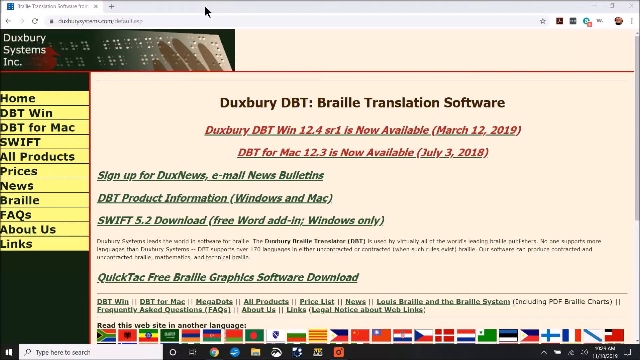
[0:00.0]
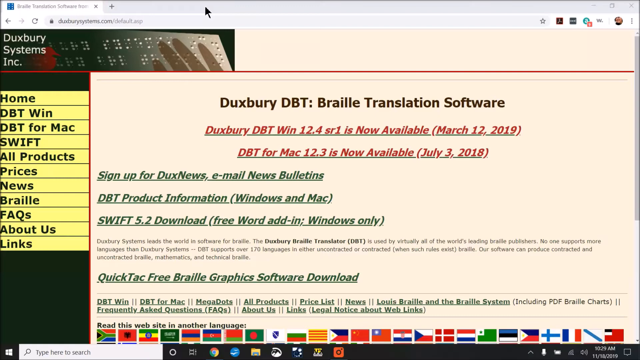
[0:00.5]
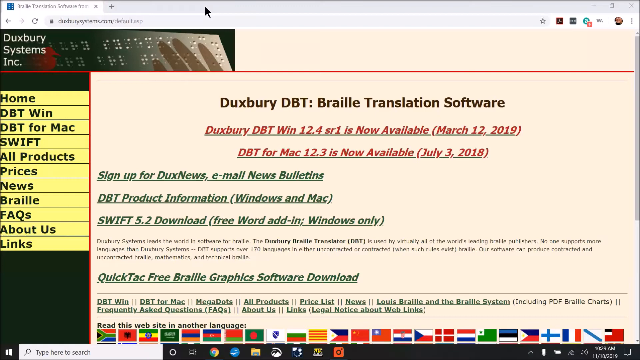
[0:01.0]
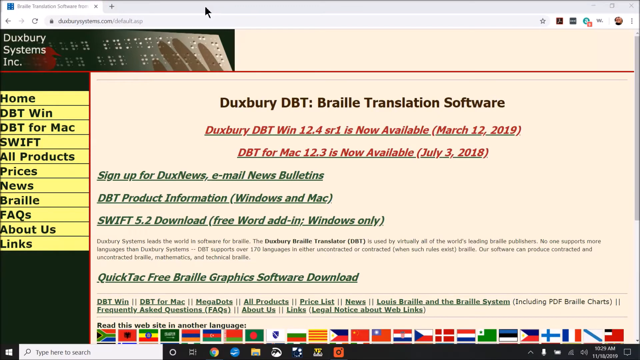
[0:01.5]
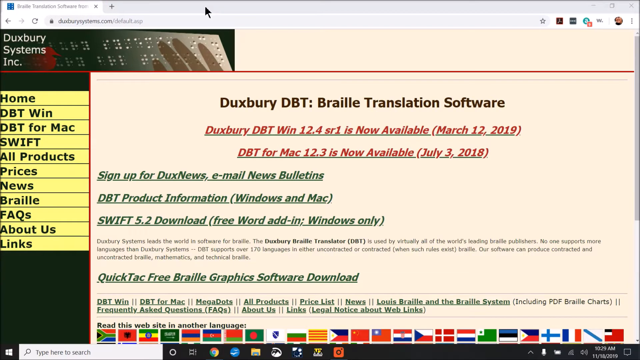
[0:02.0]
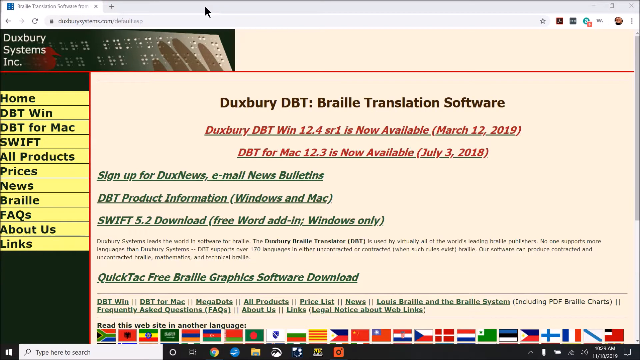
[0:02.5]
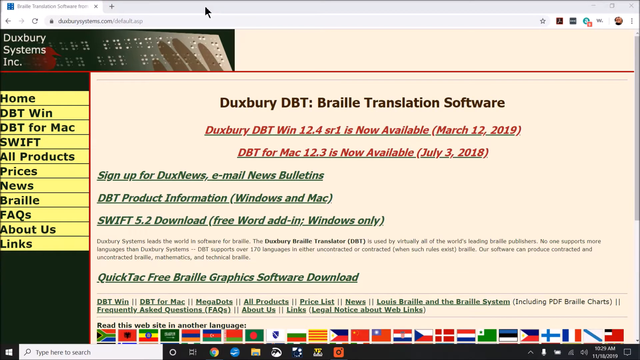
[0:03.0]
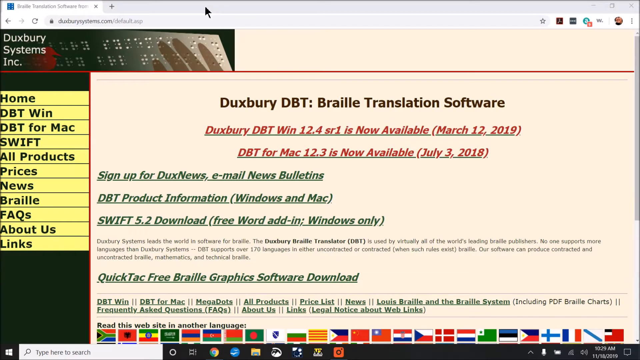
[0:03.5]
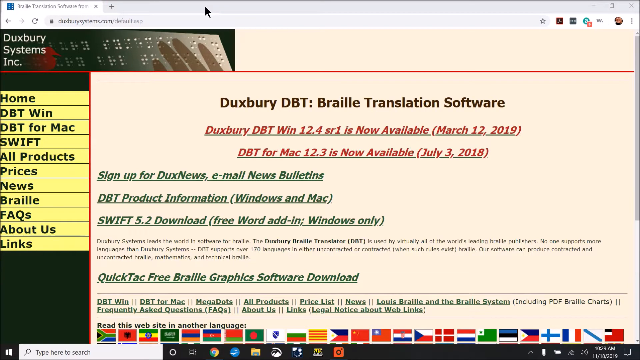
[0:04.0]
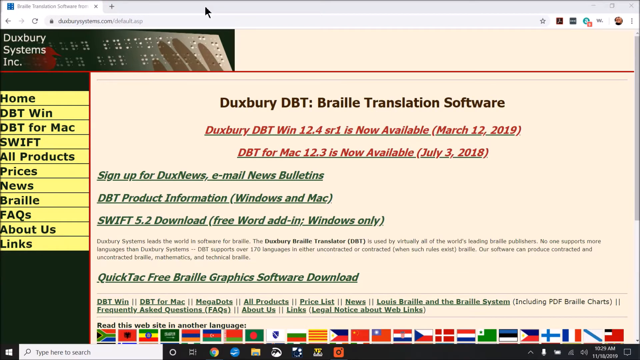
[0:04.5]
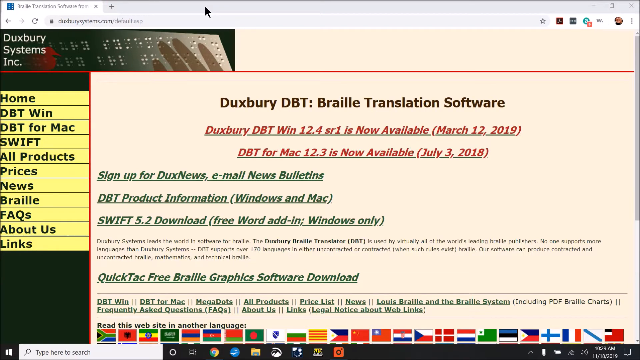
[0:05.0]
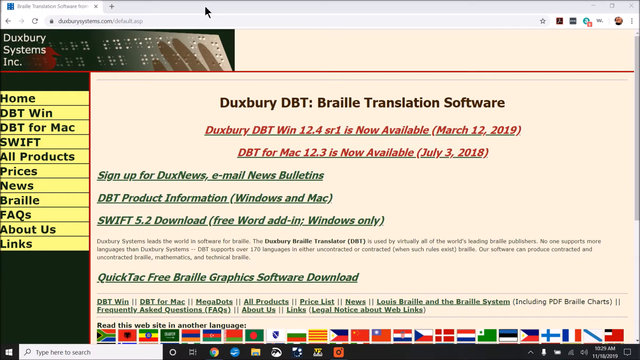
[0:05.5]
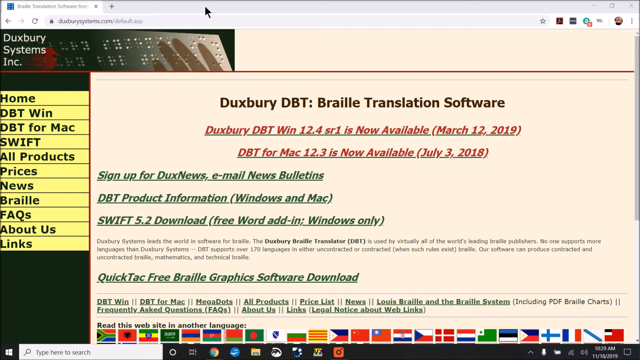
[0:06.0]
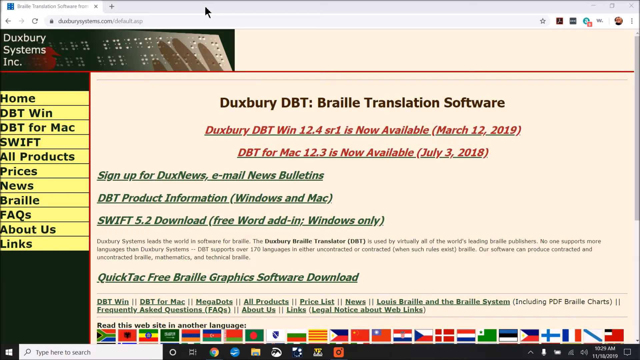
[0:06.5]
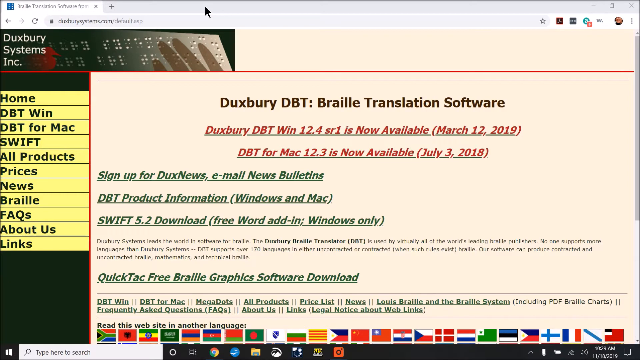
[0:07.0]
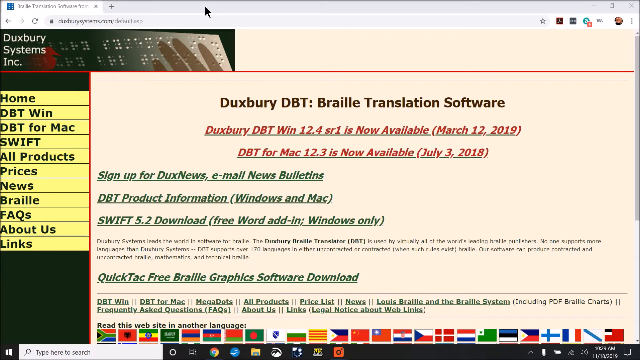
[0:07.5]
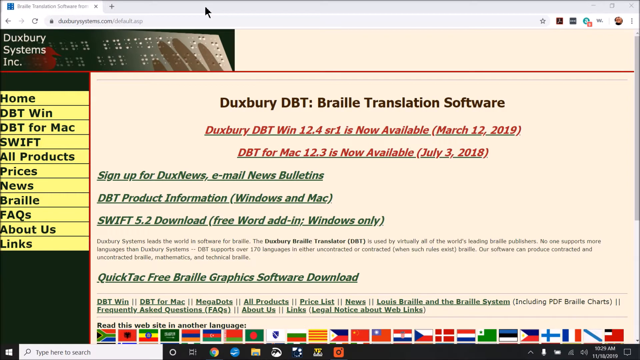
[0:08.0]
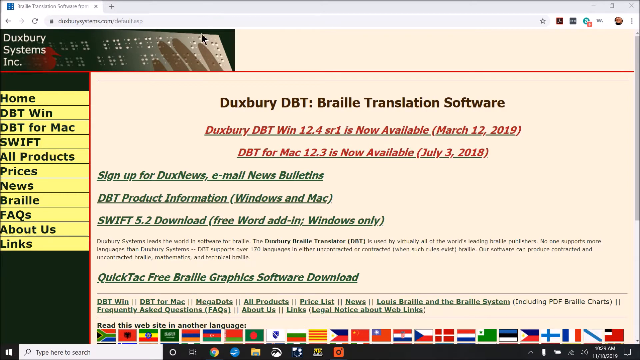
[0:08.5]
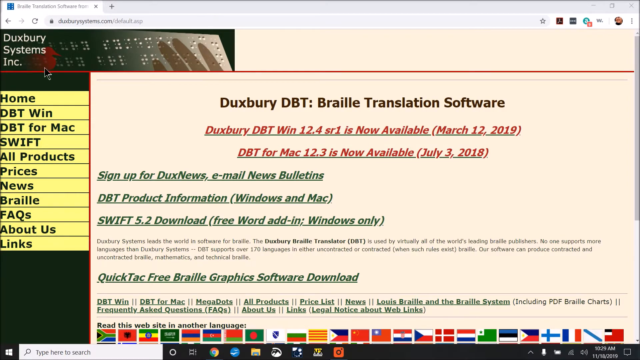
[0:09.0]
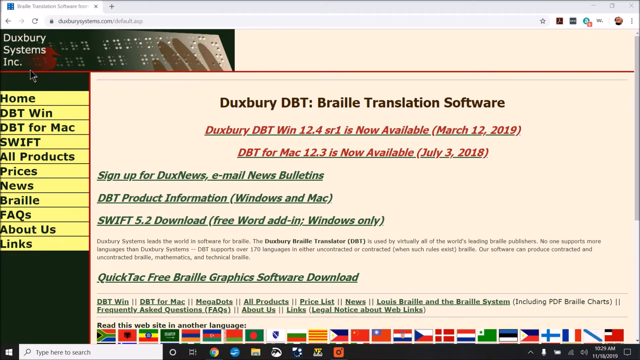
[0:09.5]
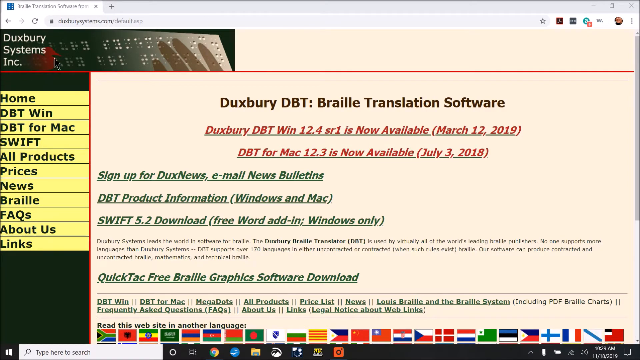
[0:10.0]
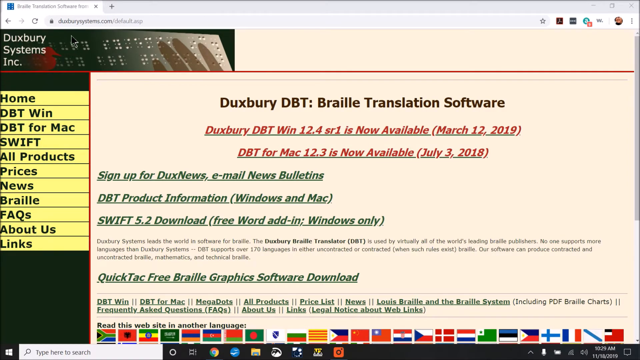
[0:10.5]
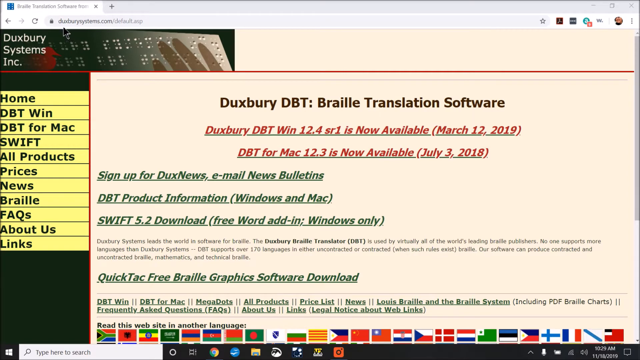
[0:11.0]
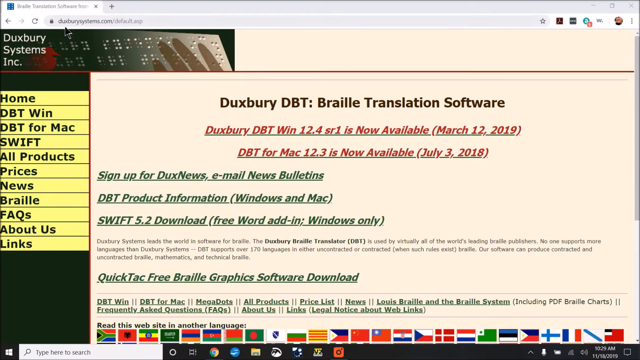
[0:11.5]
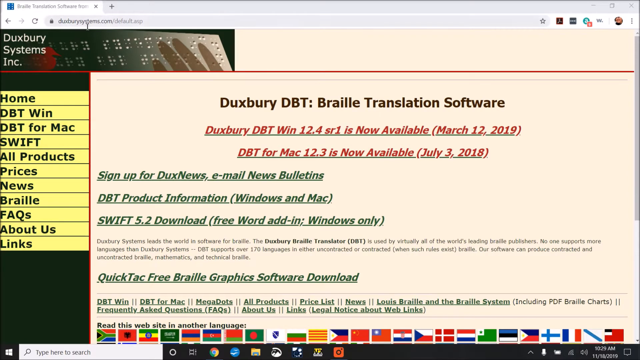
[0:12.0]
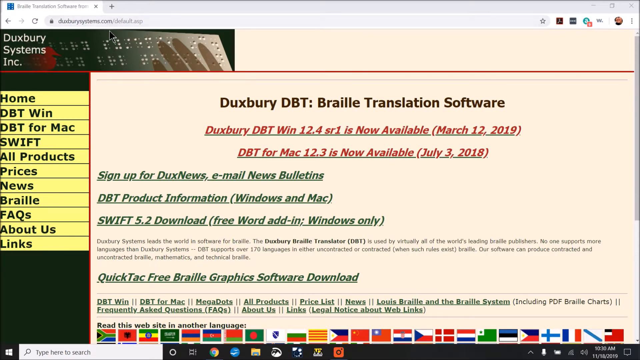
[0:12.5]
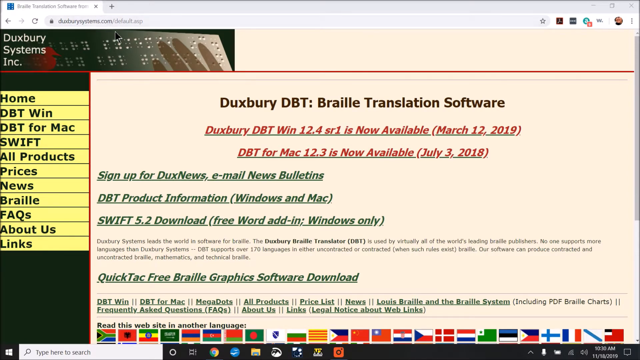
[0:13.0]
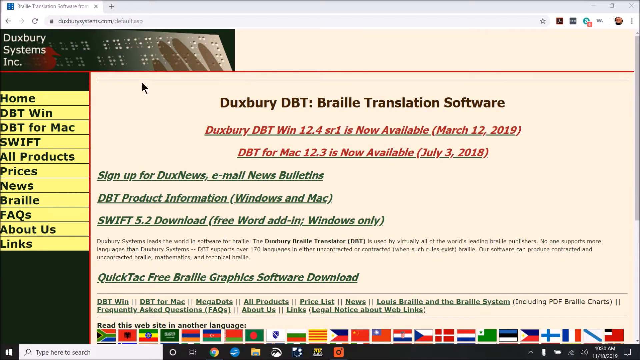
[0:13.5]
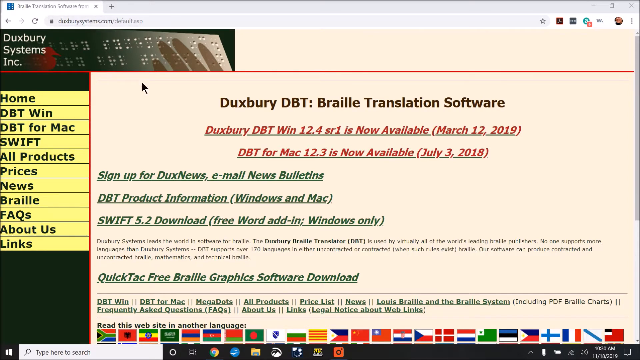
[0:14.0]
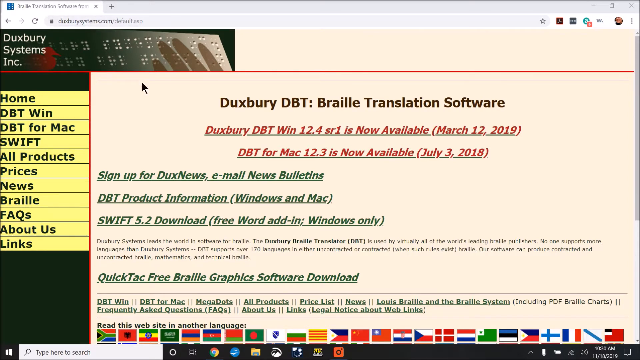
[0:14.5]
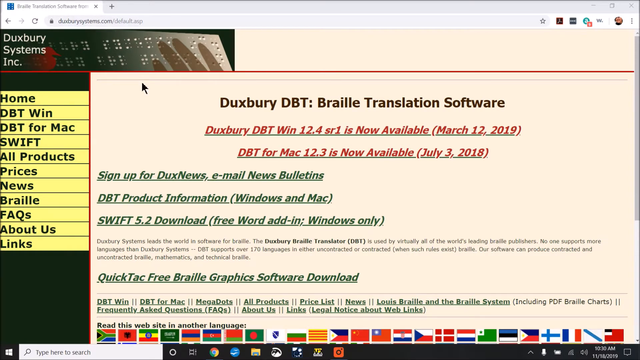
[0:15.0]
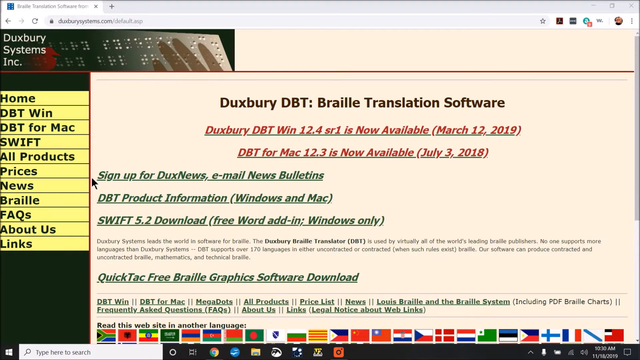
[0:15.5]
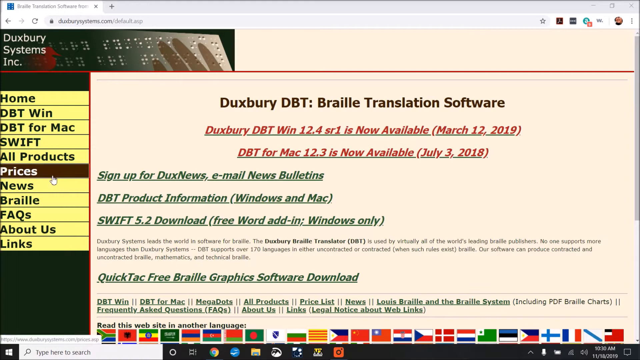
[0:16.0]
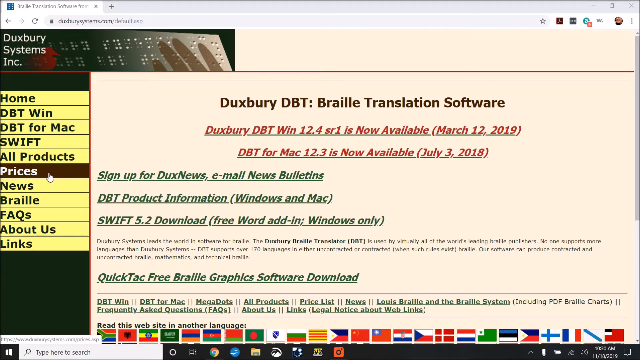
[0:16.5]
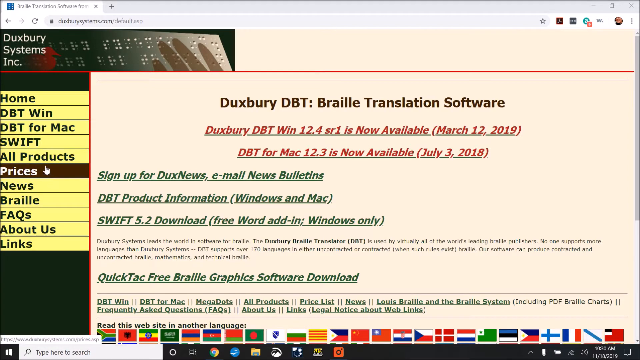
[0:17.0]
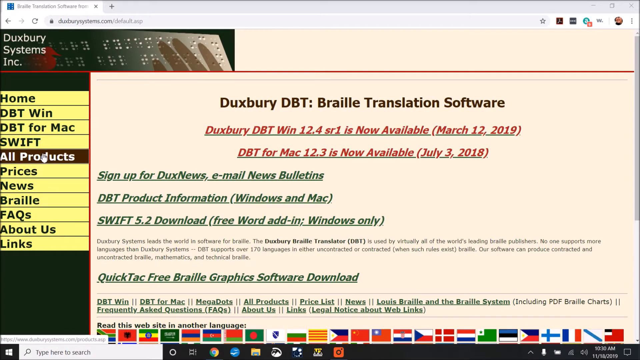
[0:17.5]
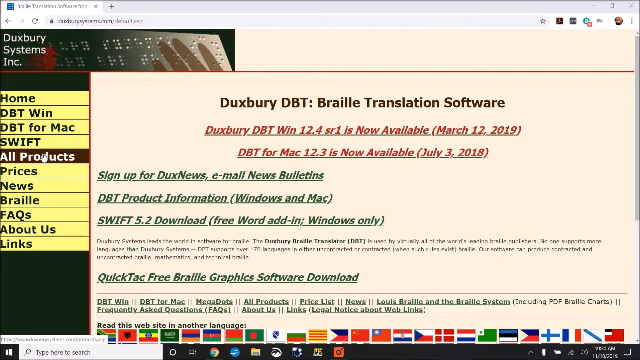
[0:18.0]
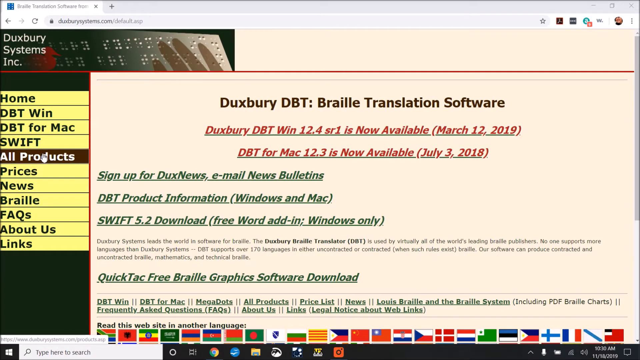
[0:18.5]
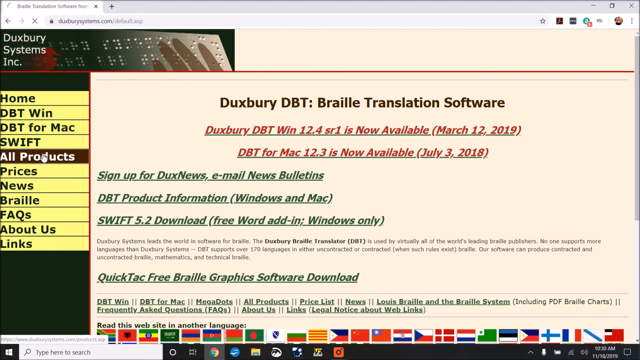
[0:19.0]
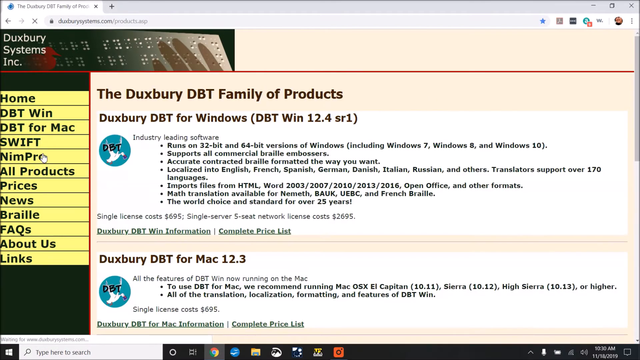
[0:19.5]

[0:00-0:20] A website is displayed with a URL that reads "Dux" and a page title that reads "Duxbury Systems, Inc."; judging by the URL, it seems to be the default page. Below the title on the left are several tab options in black text on a yellow background, reading "Home", "DBT Win", "DBT for Mac", "Swift", "All Products", "Prices", "News", "Braille", "FAQs", "About Us" and "Links". The page heading says "Duxbury, DBT, Braille Translation Software". The page then covers the versions: a Windows version from March 12th, 2019, and a Mac version from July 3rd, 2018. The rest of the page is about downloading and information, and at the bottom there are many links, from website downloads to other links such as About Us and Frequently Asked Questions. The website also offers options to read it in different languages. For most of the time the cursor just hovers over the page, then it moves over the options on the left and clicks on All Products.